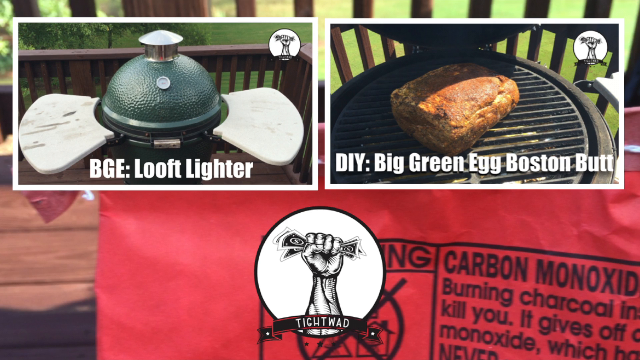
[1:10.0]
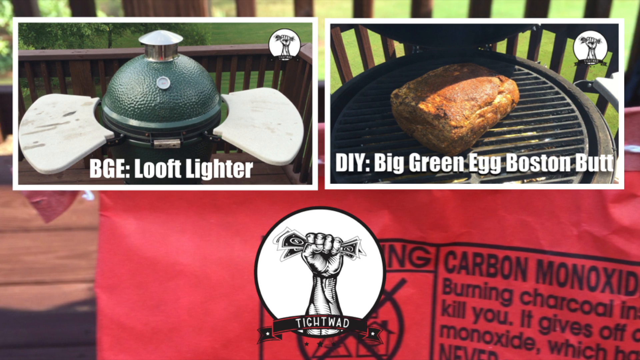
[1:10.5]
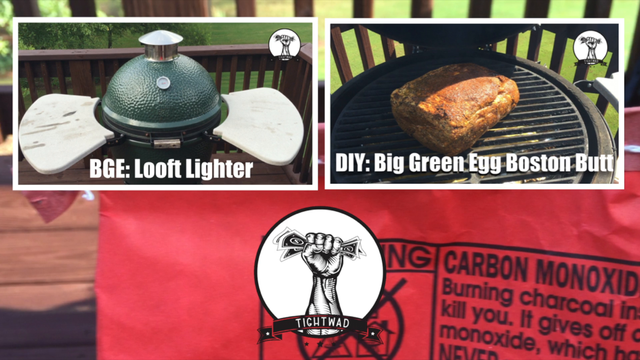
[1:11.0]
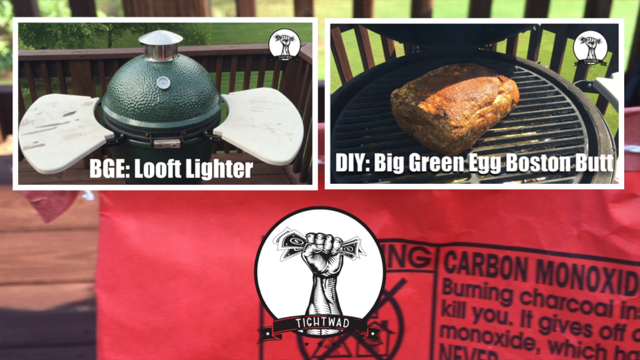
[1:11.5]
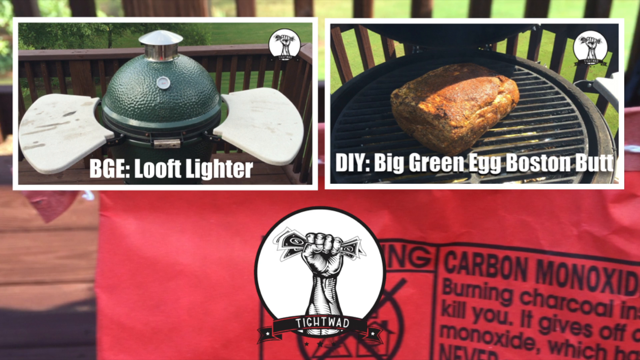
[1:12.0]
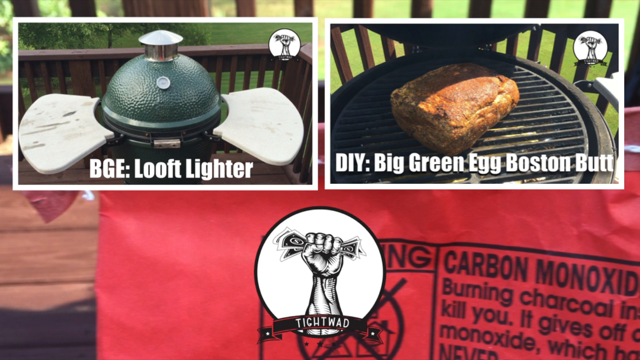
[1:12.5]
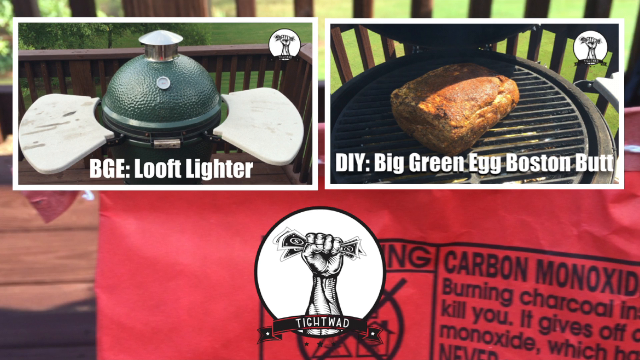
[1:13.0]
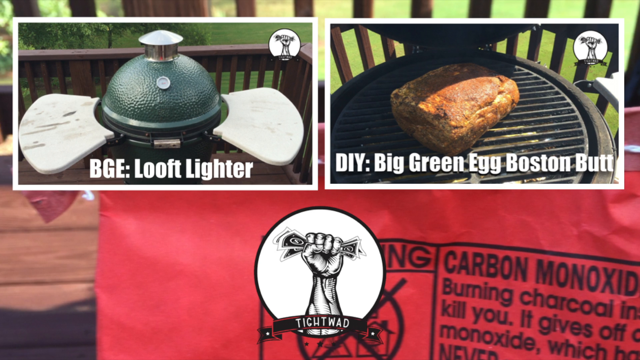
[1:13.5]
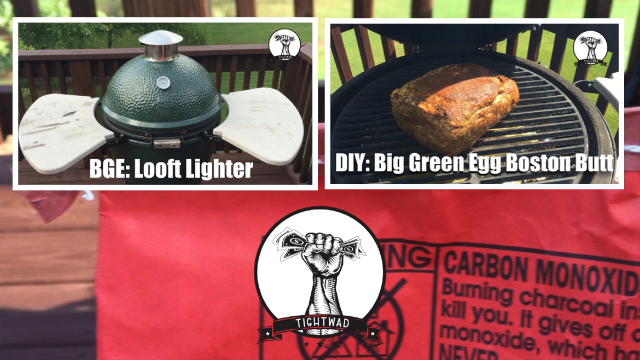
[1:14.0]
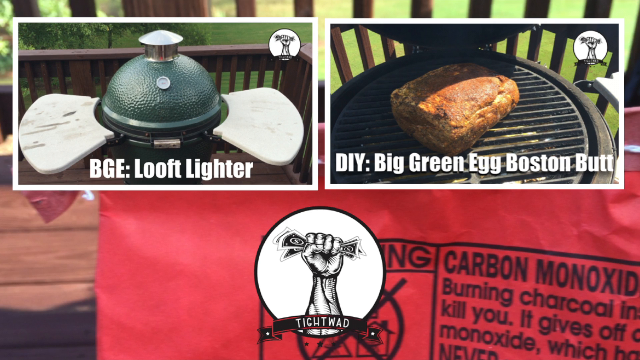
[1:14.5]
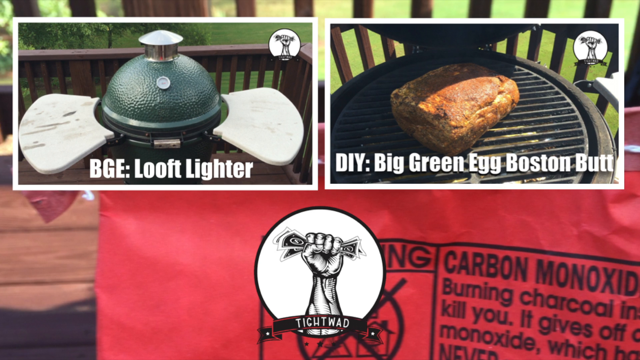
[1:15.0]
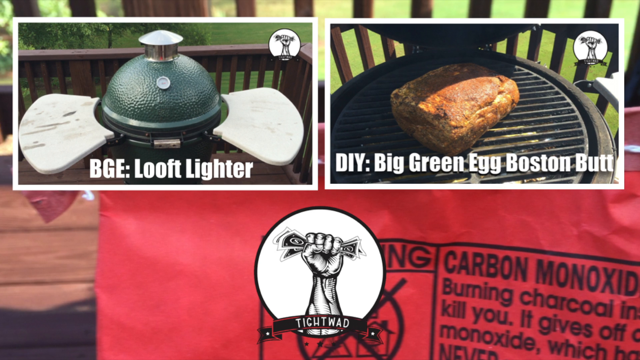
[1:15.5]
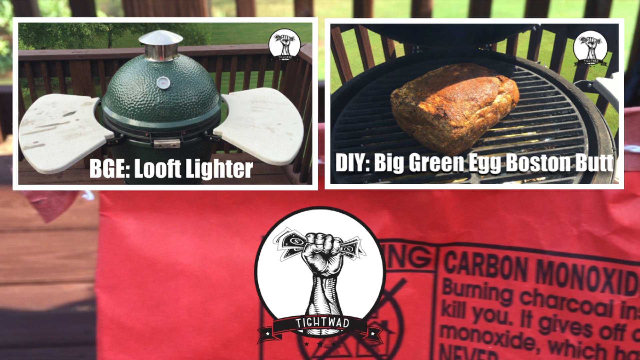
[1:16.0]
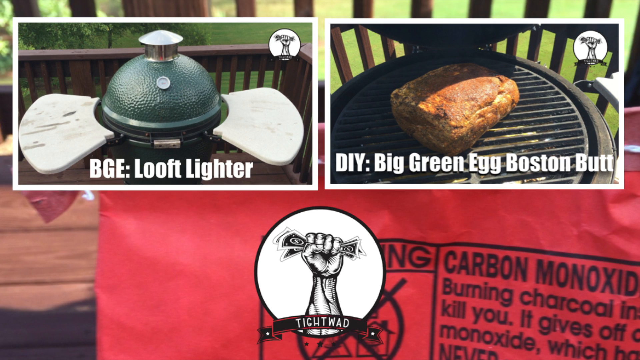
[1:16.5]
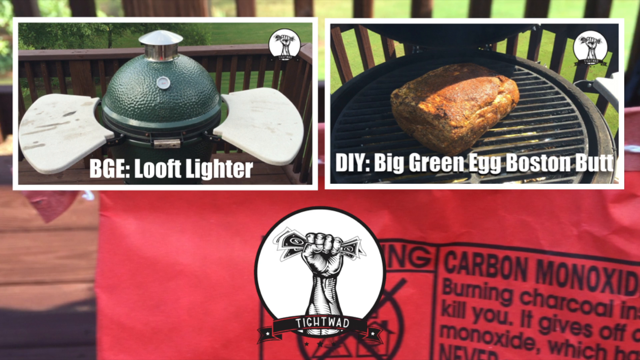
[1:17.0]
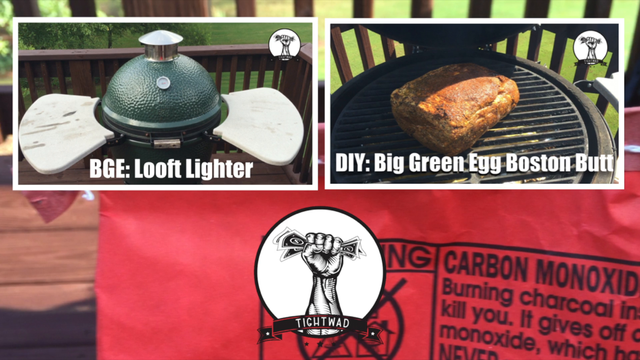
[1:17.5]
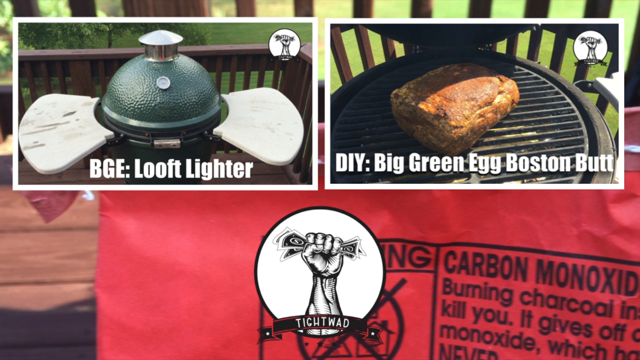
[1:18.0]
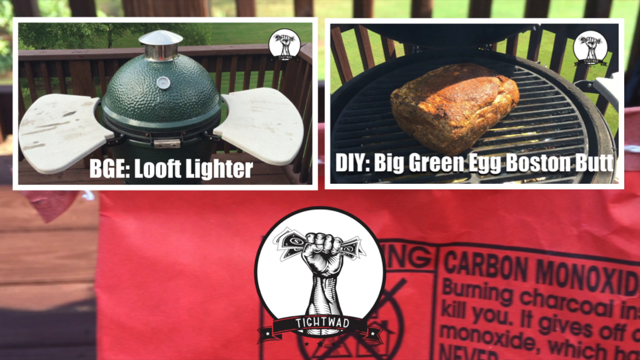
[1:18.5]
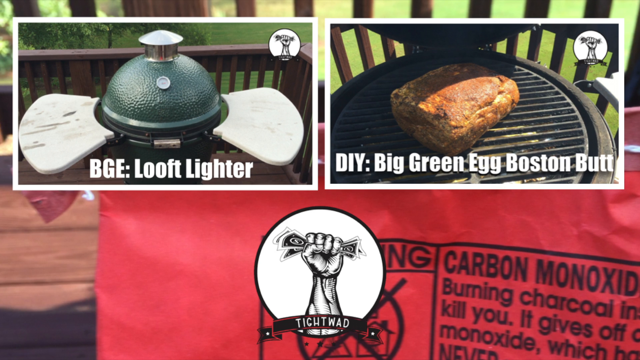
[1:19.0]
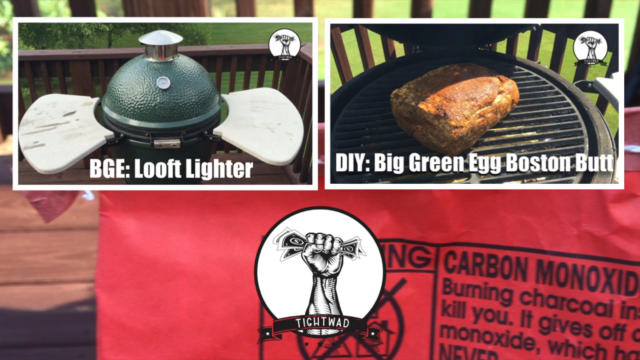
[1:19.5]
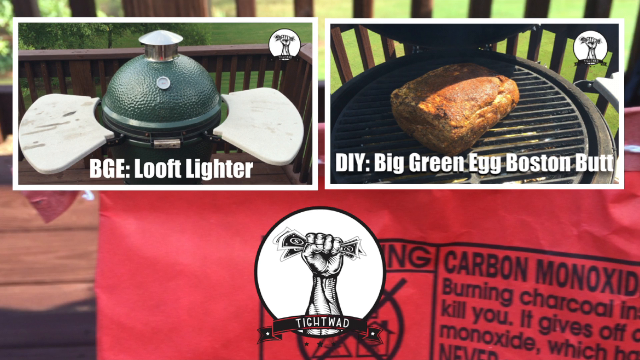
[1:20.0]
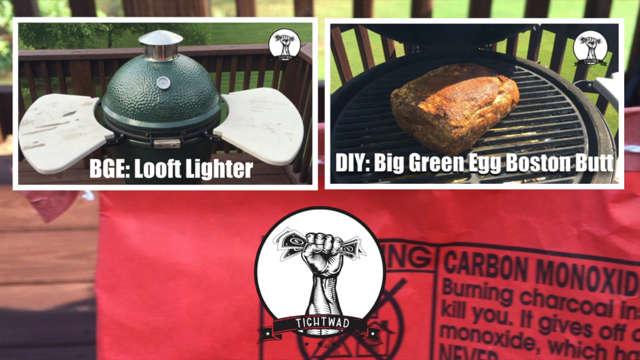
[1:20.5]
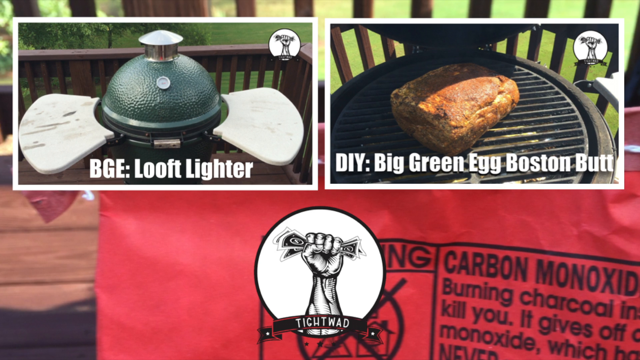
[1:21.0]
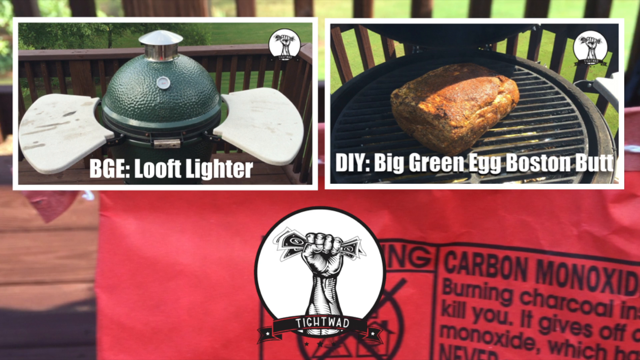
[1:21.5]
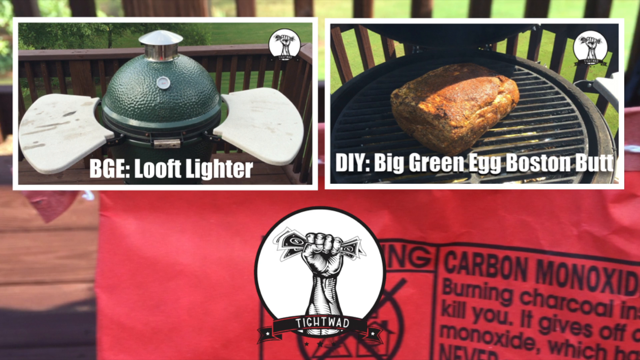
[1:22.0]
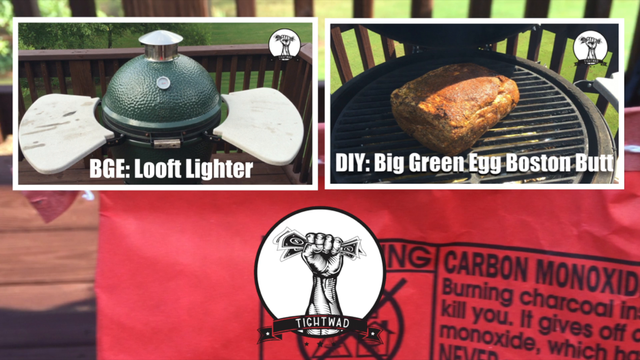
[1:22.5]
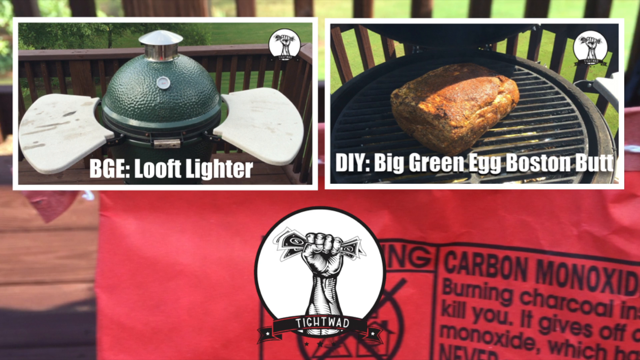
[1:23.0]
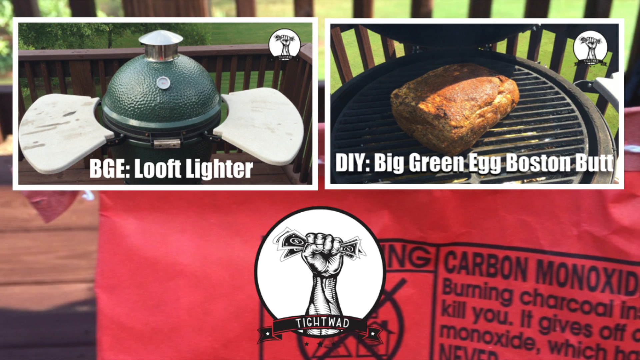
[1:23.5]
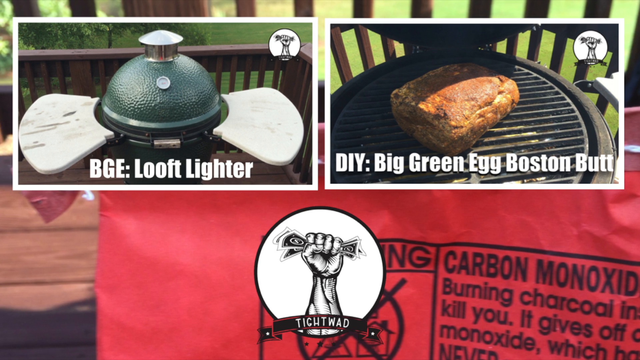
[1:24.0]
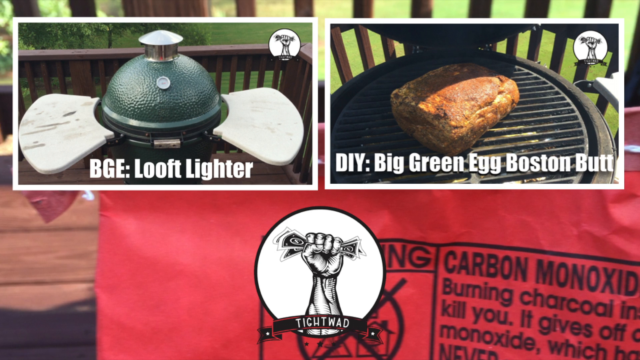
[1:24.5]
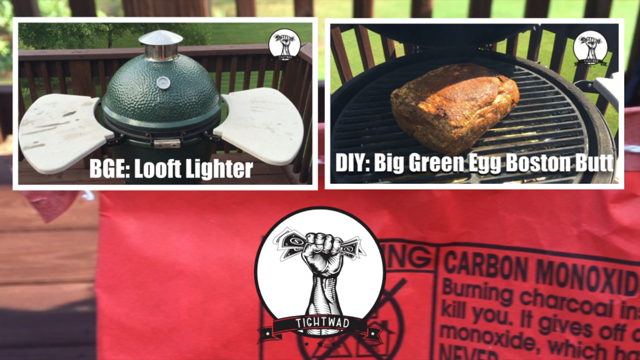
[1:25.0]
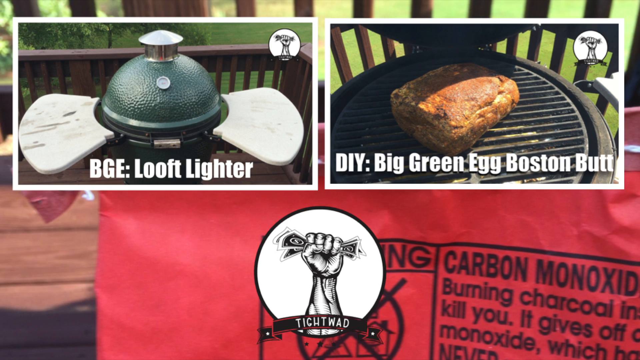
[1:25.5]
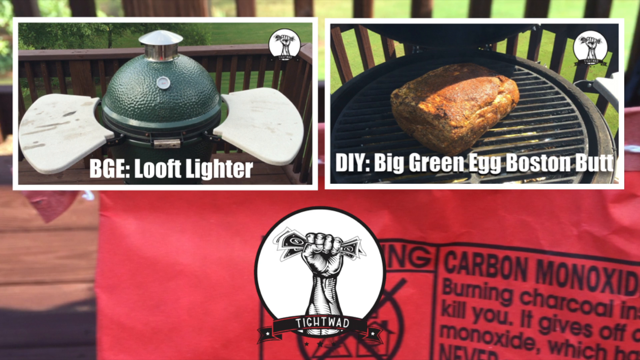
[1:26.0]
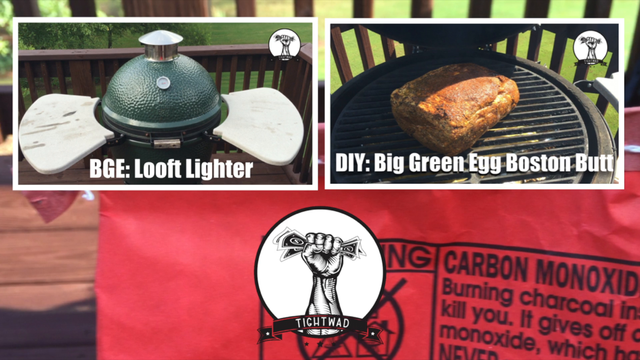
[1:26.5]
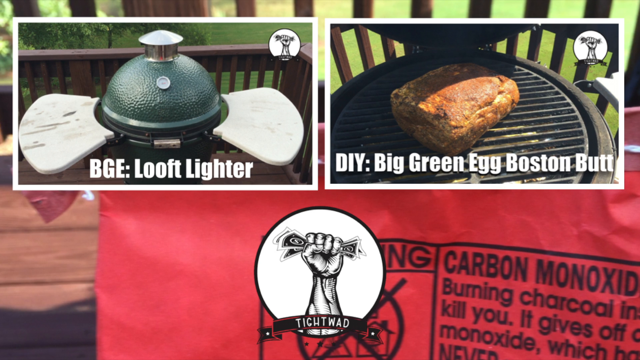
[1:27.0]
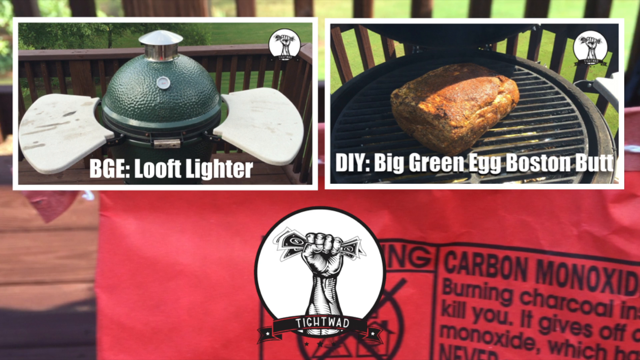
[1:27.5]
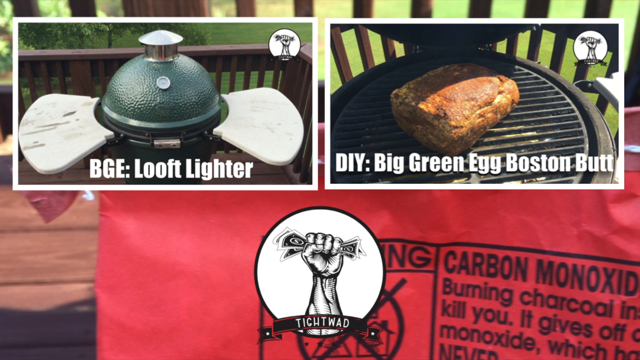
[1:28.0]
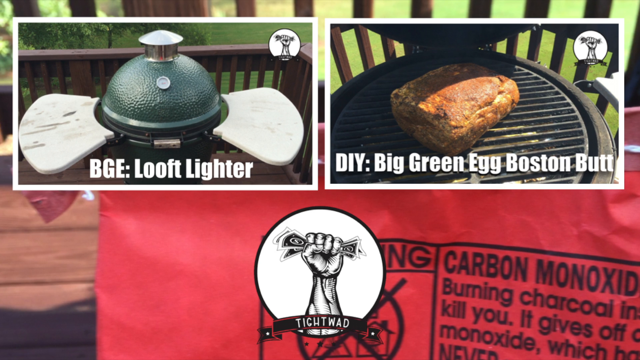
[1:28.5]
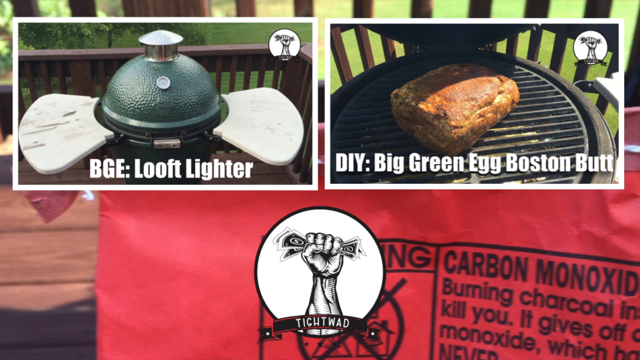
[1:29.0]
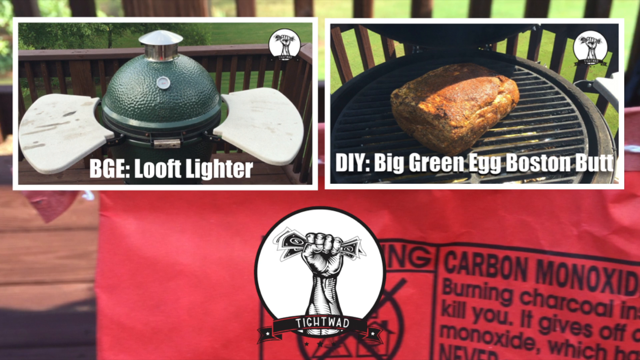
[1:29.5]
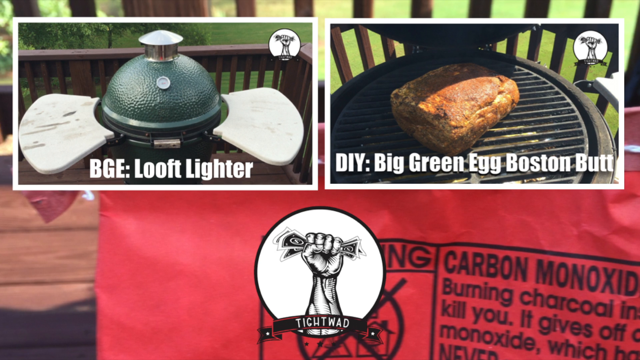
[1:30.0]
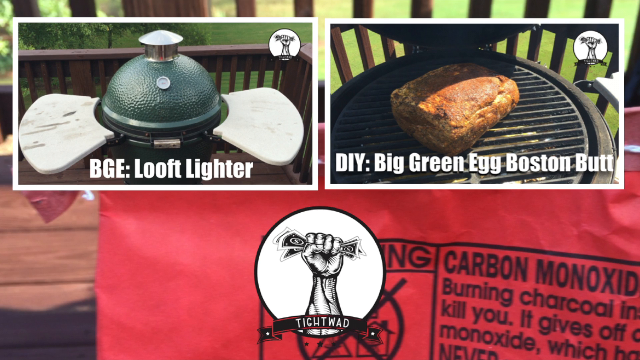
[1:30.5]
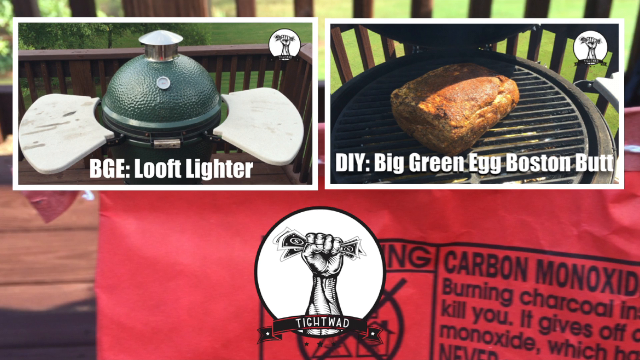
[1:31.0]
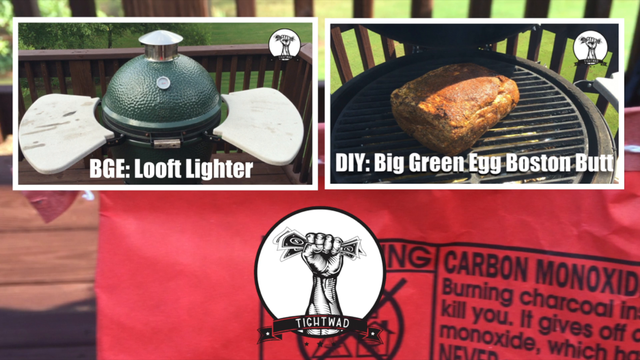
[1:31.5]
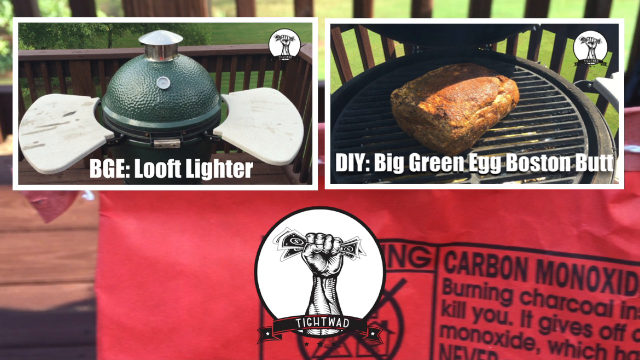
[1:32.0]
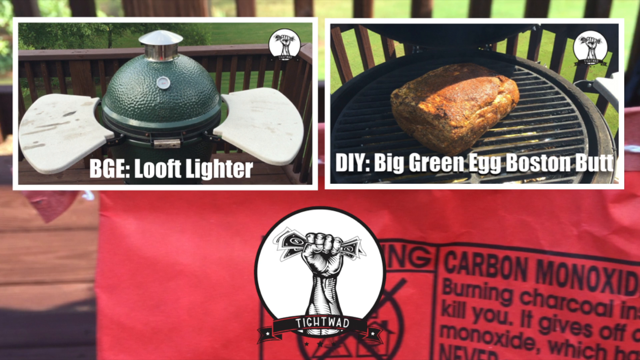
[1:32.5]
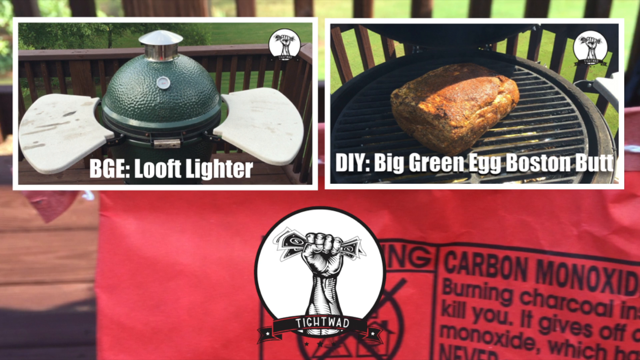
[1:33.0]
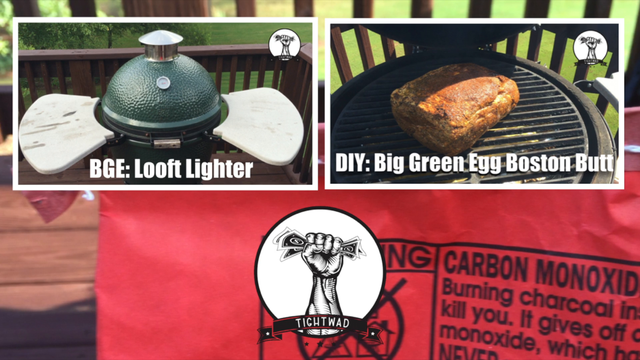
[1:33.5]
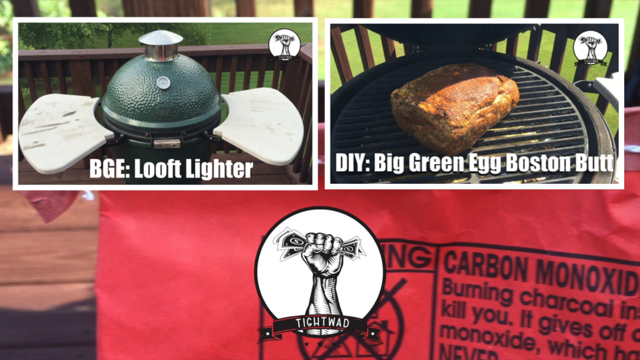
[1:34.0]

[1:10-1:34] Two options are shown on screen. A logo of a muscular fist holding money appears, along with some written text. The video seems to be of a person using charcoal to grill.